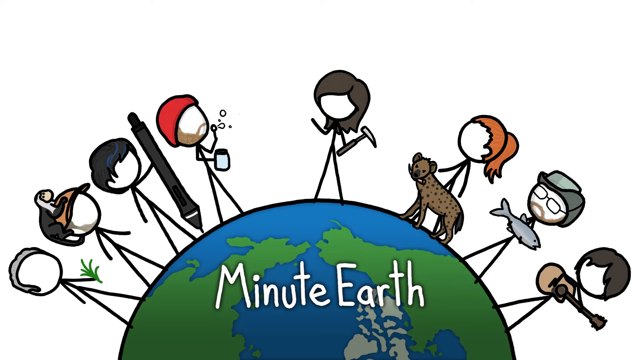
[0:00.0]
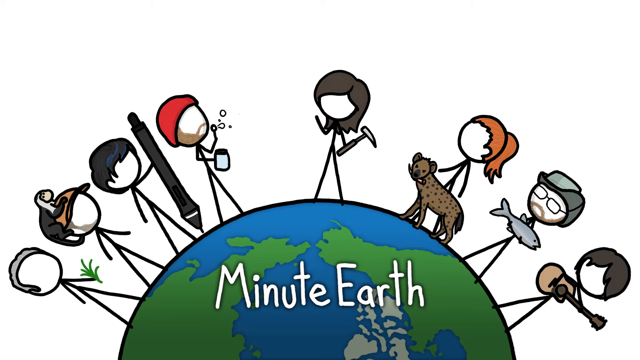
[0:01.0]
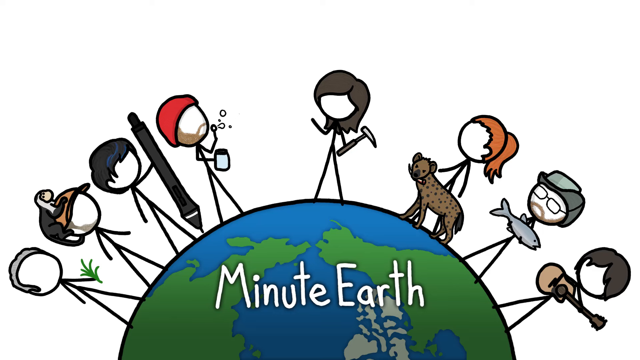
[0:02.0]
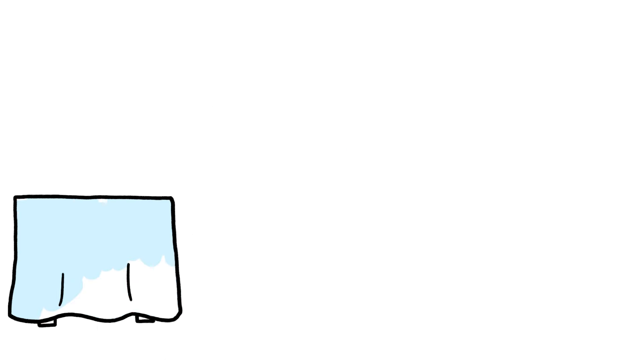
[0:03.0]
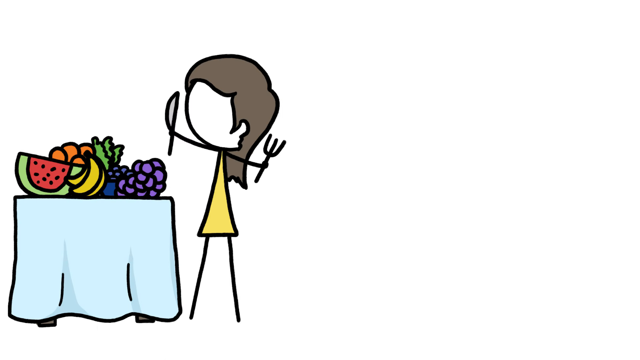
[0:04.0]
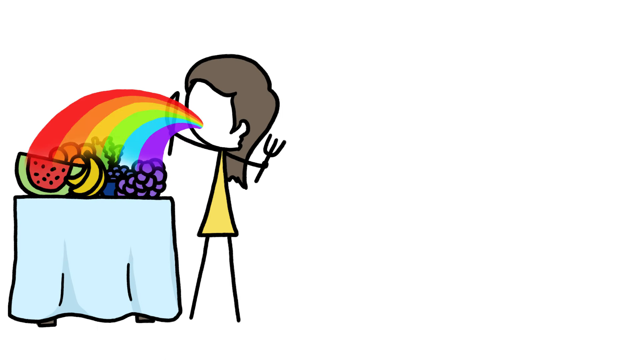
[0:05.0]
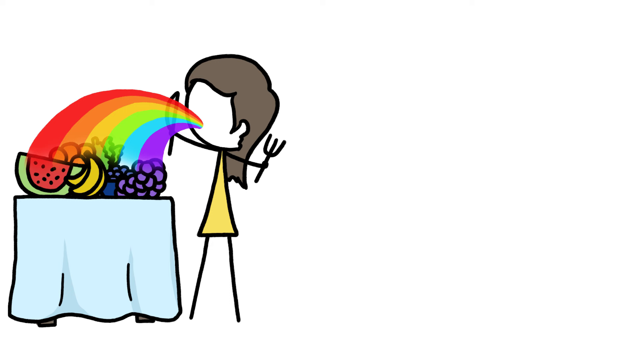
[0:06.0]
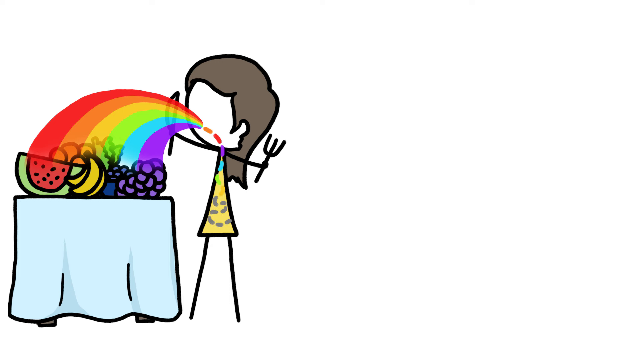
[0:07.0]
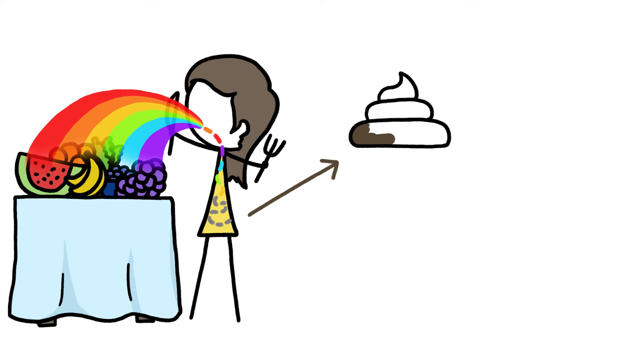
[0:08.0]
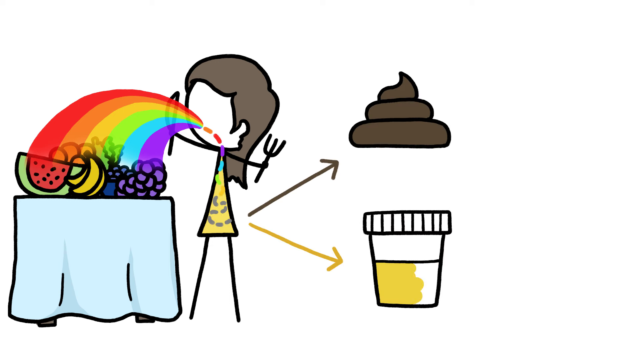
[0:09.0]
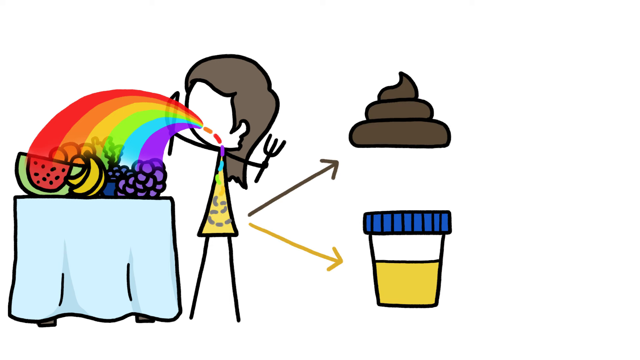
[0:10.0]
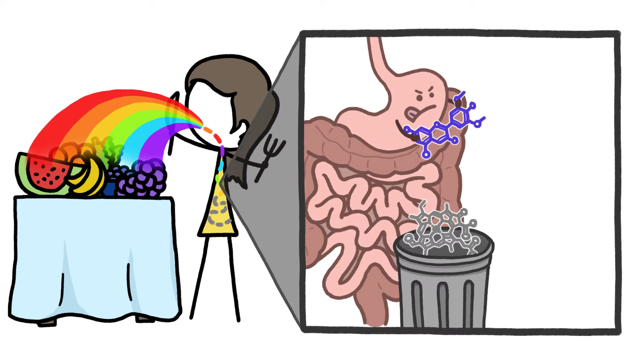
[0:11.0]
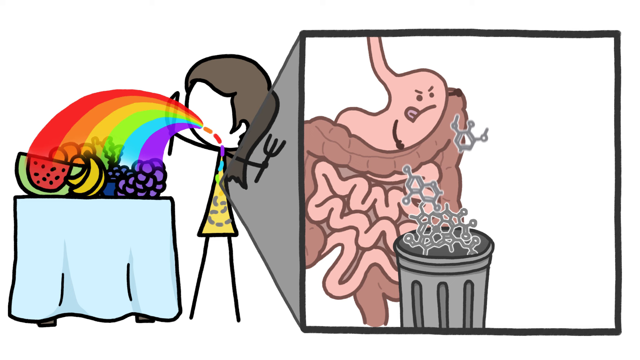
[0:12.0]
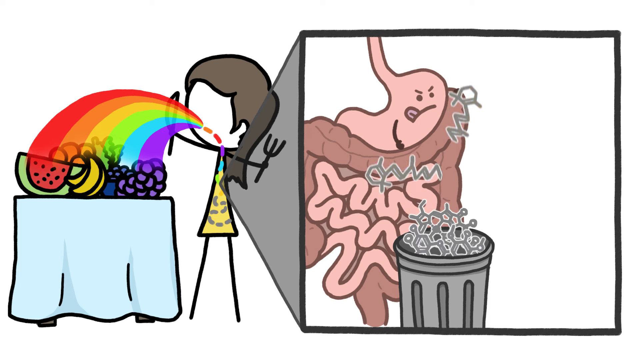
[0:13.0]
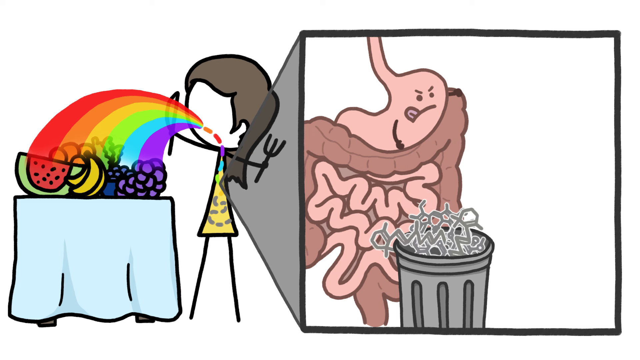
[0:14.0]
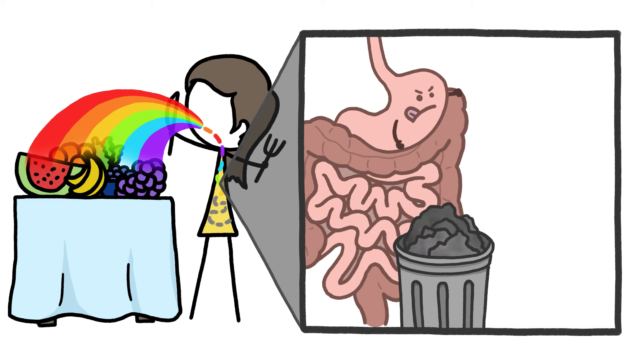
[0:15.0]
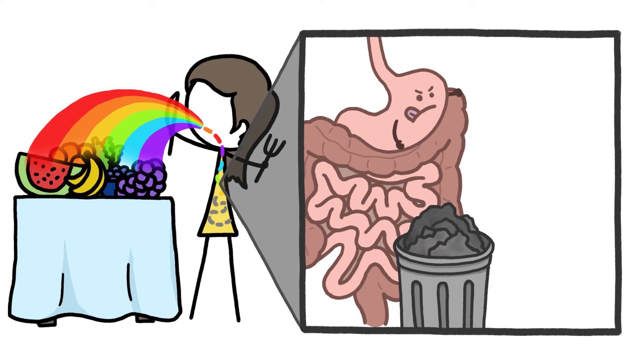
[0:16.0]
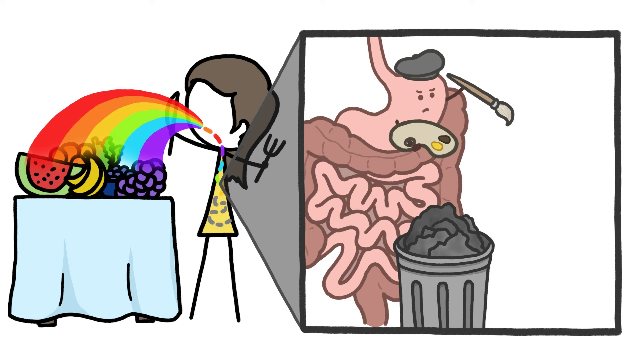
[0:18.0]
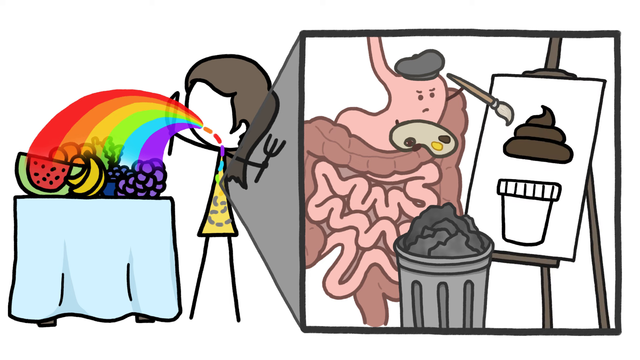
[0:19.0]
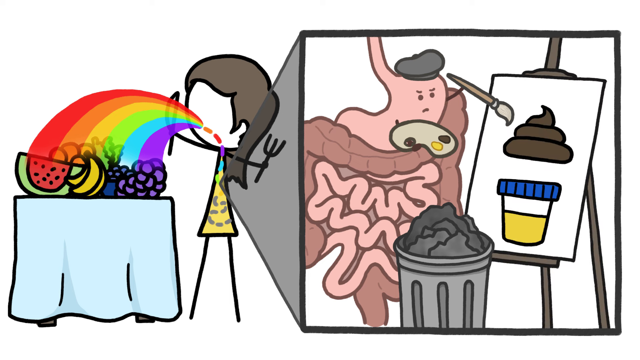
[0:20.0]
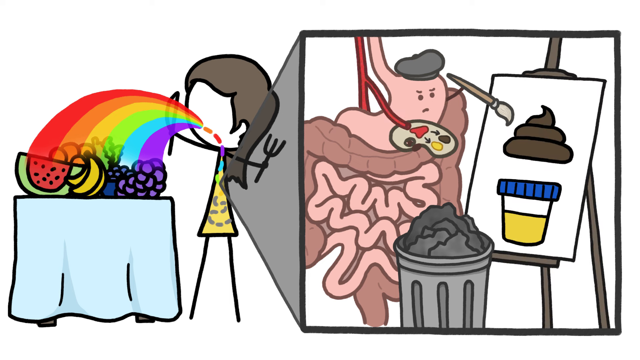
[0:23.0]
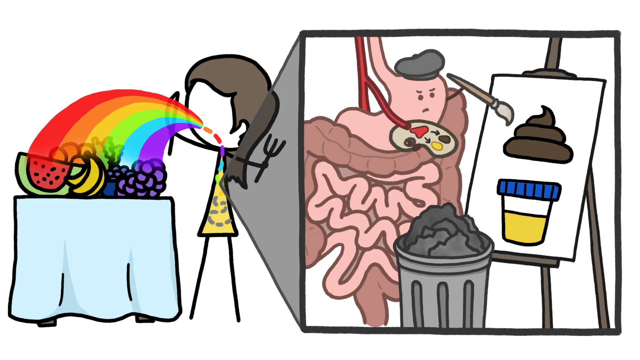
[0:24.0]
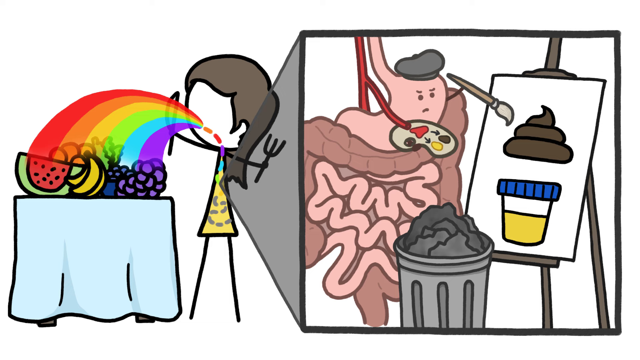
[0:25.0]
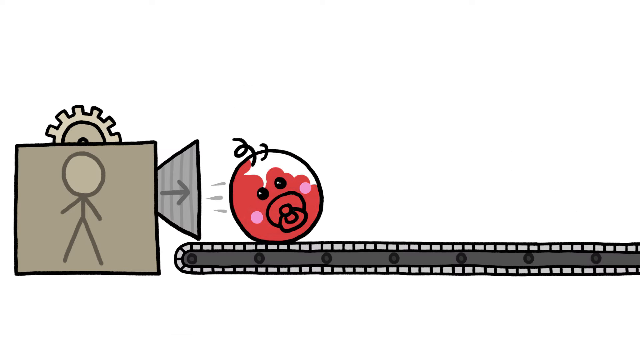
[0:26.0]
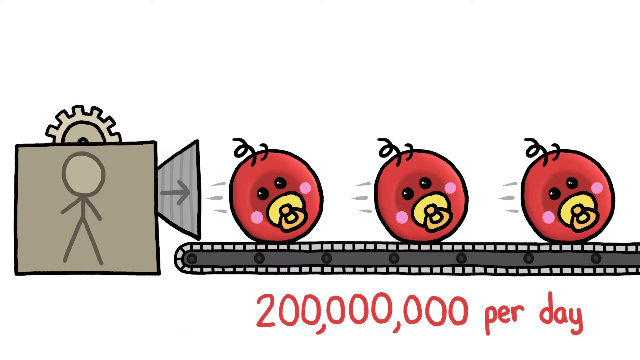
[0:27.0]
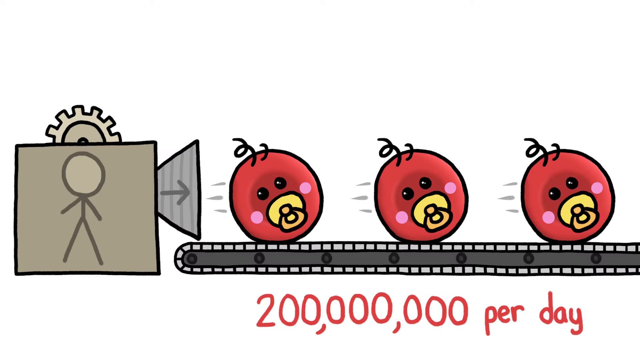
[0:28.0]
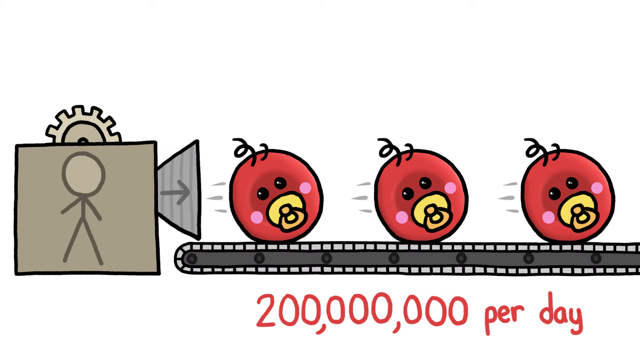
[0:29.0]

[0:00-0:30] The video opens on a drawing with a white background. In the middle, at the bottom, is the world, curved over, with little stick figures around it. Four are on the left: the far left one holds a bit of grass and has green hair, and, like the others, has no facial features; the next has an orange baseball cap and a monkey on his head; the next holds a giant pencil and has black hair; and the next wears a beanie hat, blows bubbles and holds a cup. At the very top of the earth is a stick figure with shoulder-length hair holding a pickaxe, who is shaking their arm. To the right of them is a stick figure with orange hair and a ponytail with a cheetah or a hyena in front of her. To her right is a stick figure wearing a cowboy hat and glasses and holding a fish, and to the right of that person is somebody with short hair holding a guitar. The video cuts to a scene with a table on the far left holding various fruit: grapes, bananas, oranges and a melon. A stick figure with shoulder-length dark hair, wearing a yellow dress and holding a knife and fork, is drawn. A large rainbow in red, orange, yellow, green, blue and purple comes from the fruit and goes into the figure's mouth. A dashed line heads down towards the person's stomach and starts to coat the inside of the stomach. To the right, an arrow comes from the person's bum and draws a poo, then another arrow from the same area draws a test cup with urine in it. A large square comes out of the stomach to the right, showing the person's intestines. The stomach holds something that looks like bacteria, with a rubbish bin underneath, and it breaks up the bacteria and puts it into the bin. The stomach then puts on a painter's hat, holds a paint palette in one hand and a paintbrush in its right hand; an easel appears and it paints a poo, and underneath it the test cup with urine, which has a blue lid. The video cuts to a different scene showing a projector with a stick figure on its side, a cog above it, and to the right what looks like a camera and an arrow pointing towards a conveyor belt. On the conveyor belt are cartoon red berries with pacifiers in their mouths, and a band-aid and a spanner appear above them.